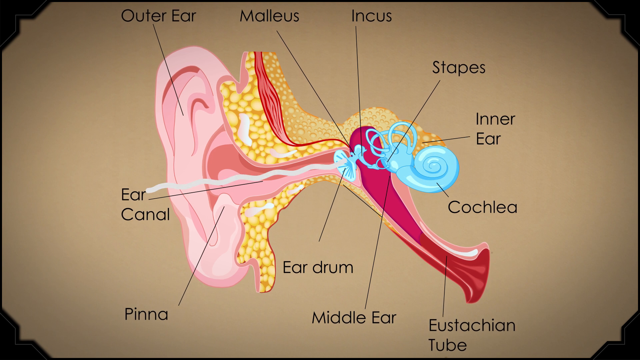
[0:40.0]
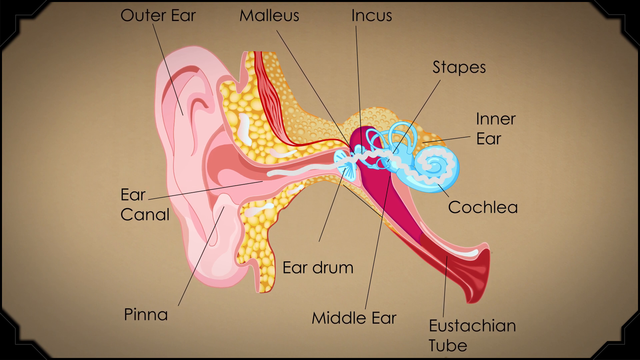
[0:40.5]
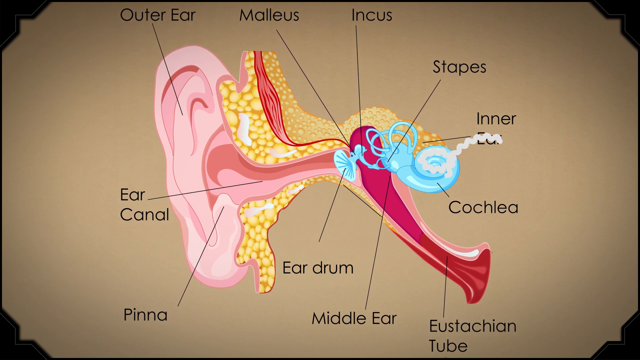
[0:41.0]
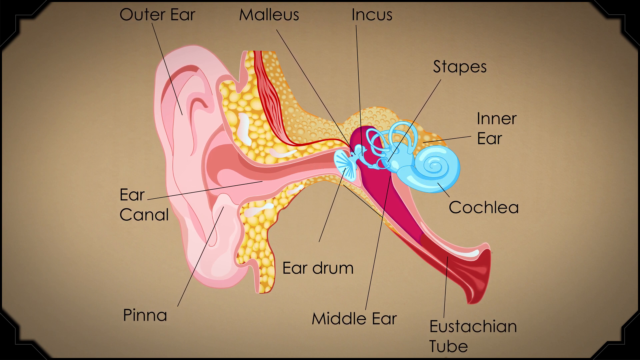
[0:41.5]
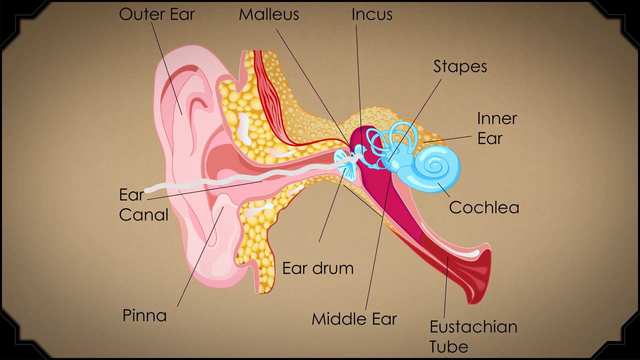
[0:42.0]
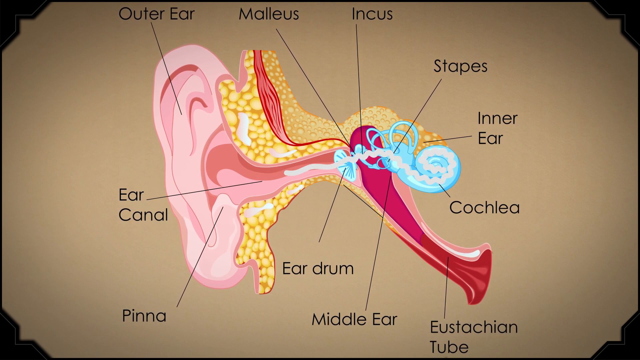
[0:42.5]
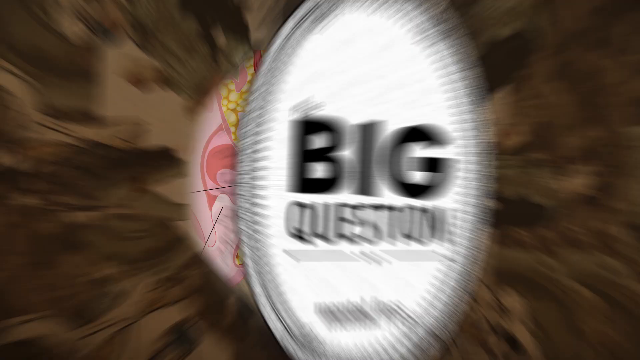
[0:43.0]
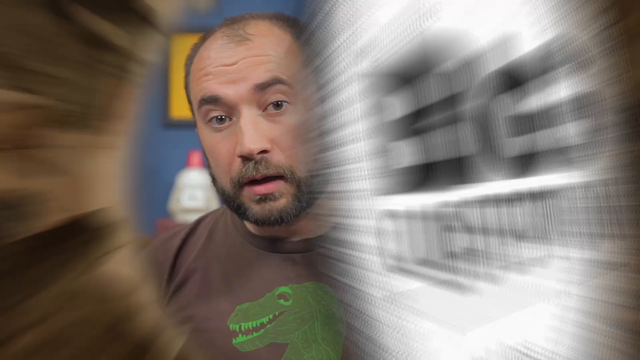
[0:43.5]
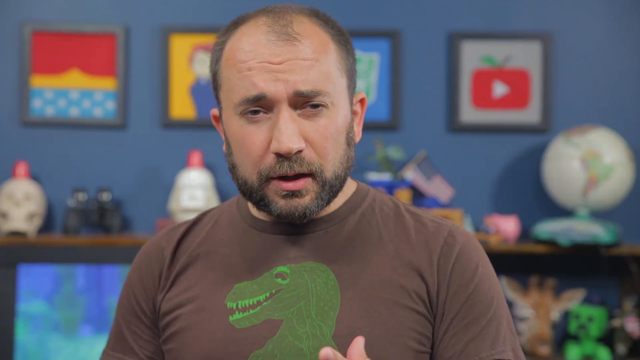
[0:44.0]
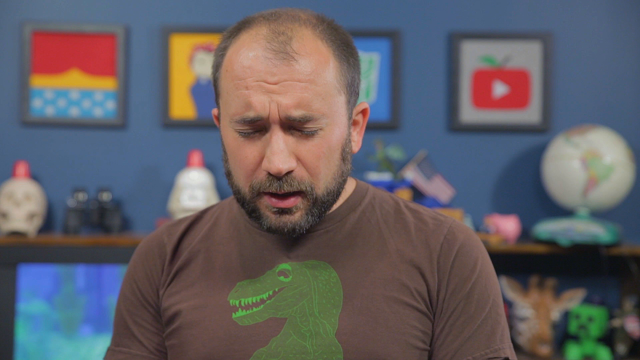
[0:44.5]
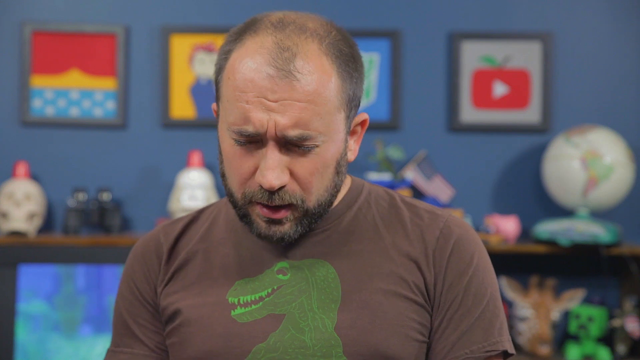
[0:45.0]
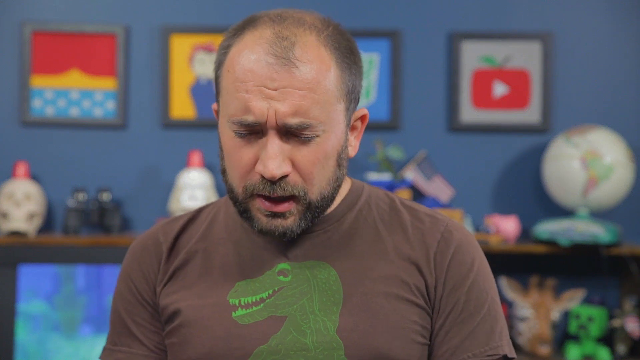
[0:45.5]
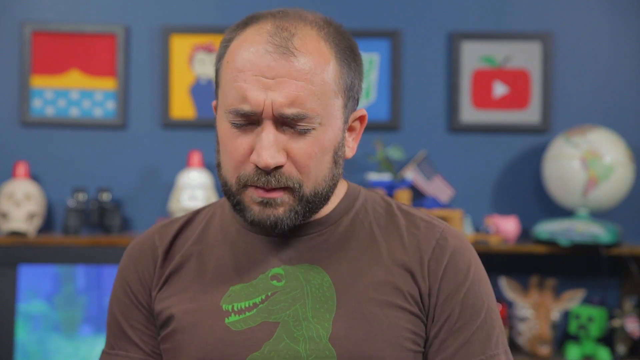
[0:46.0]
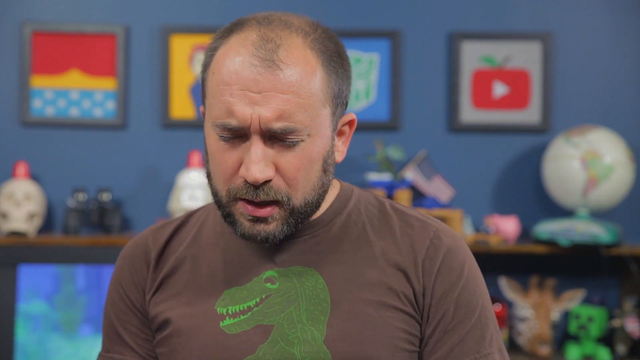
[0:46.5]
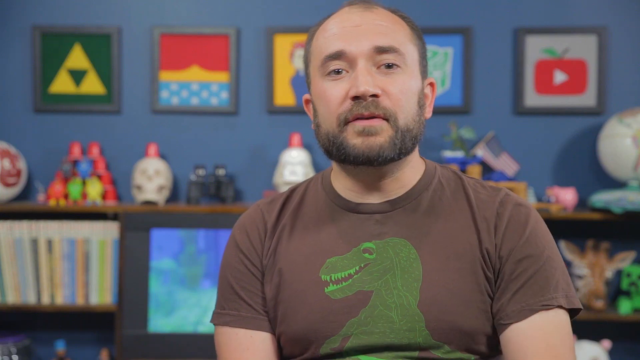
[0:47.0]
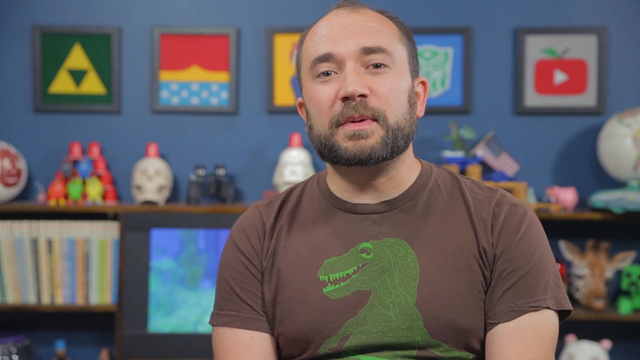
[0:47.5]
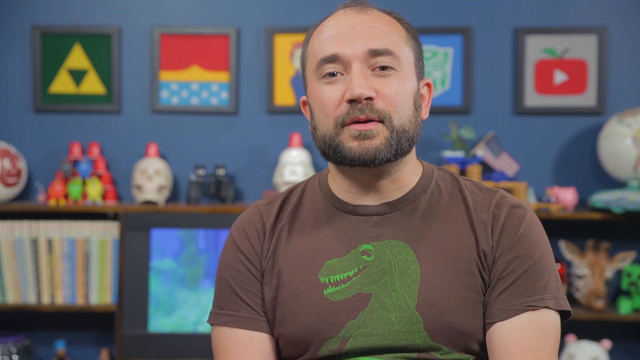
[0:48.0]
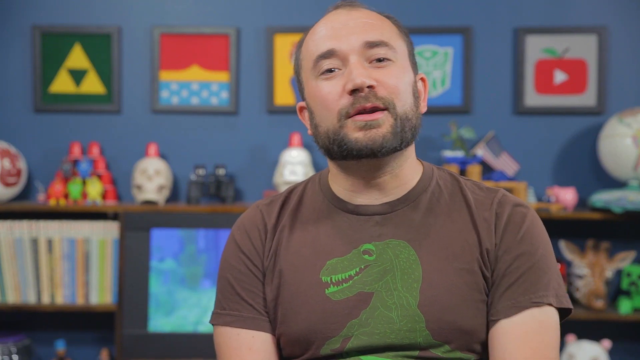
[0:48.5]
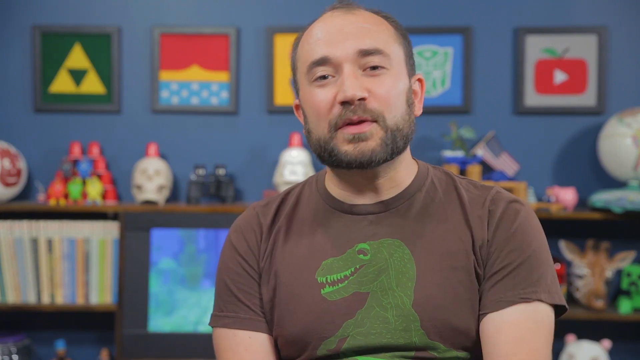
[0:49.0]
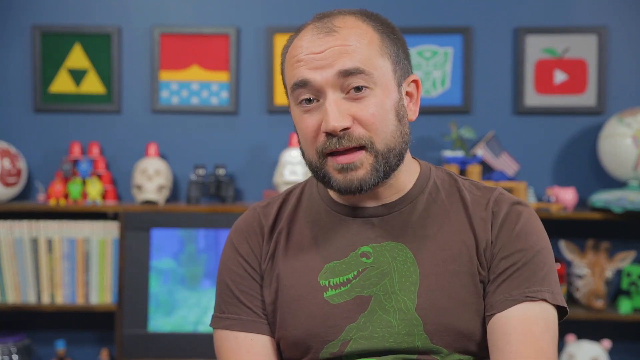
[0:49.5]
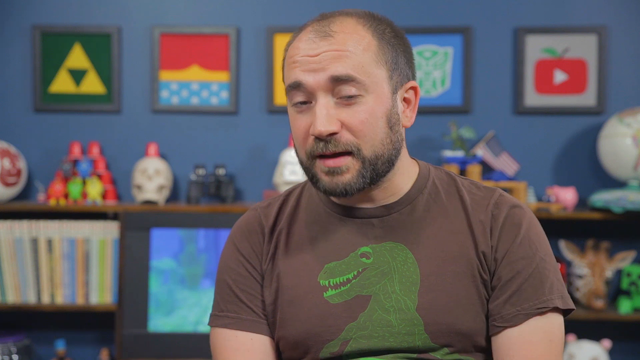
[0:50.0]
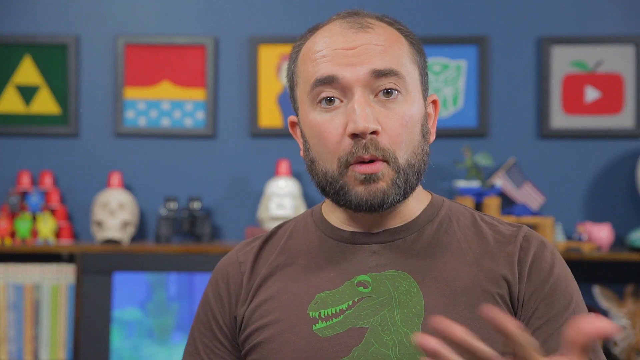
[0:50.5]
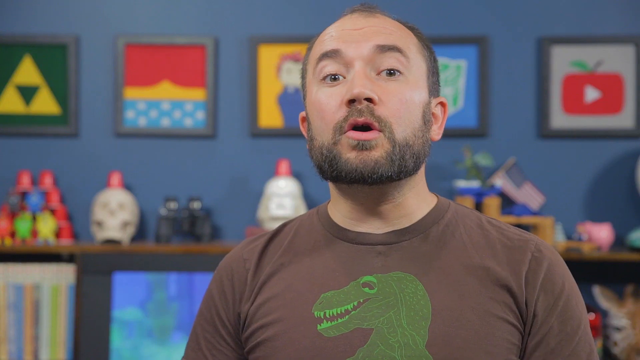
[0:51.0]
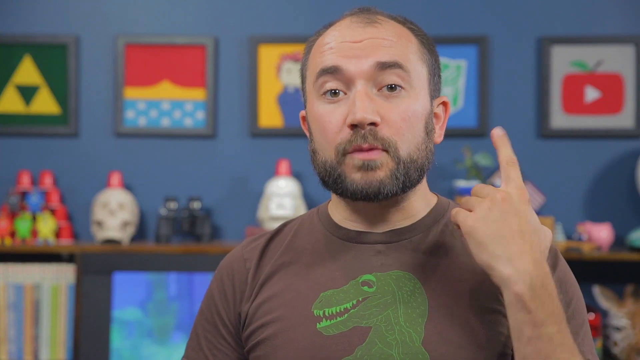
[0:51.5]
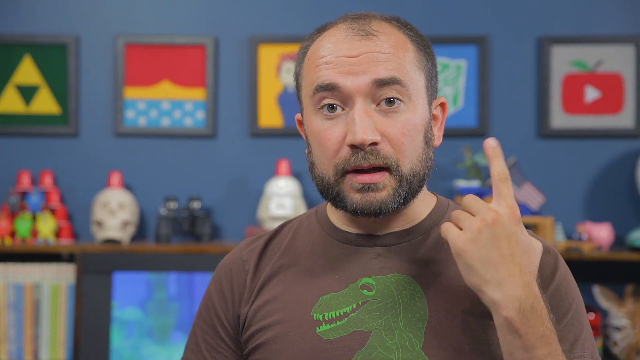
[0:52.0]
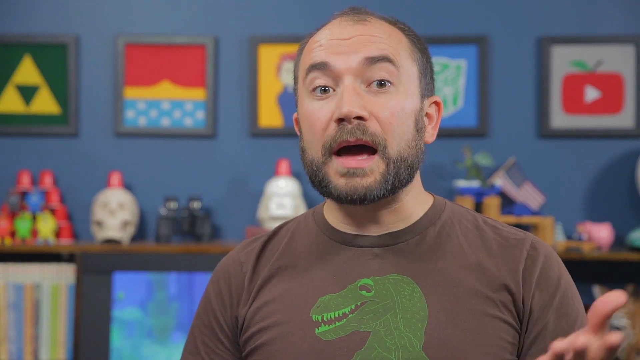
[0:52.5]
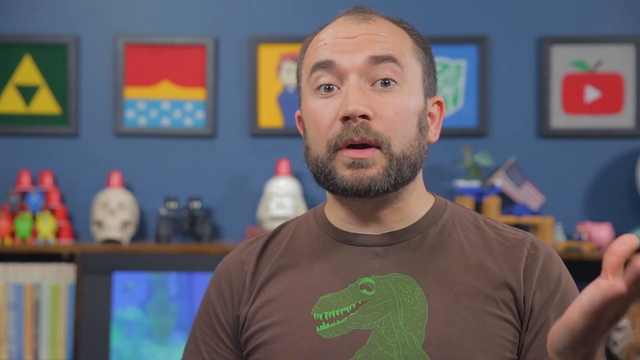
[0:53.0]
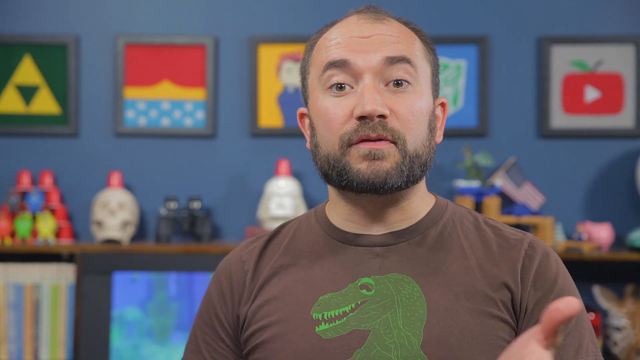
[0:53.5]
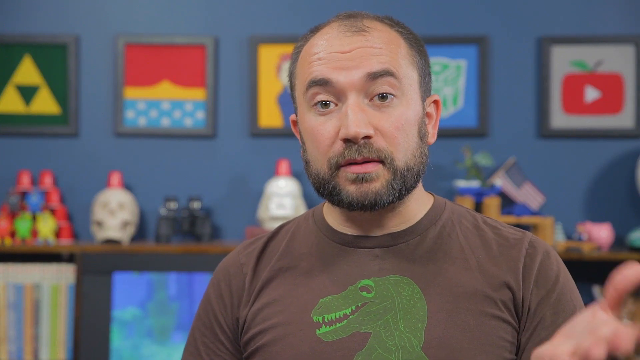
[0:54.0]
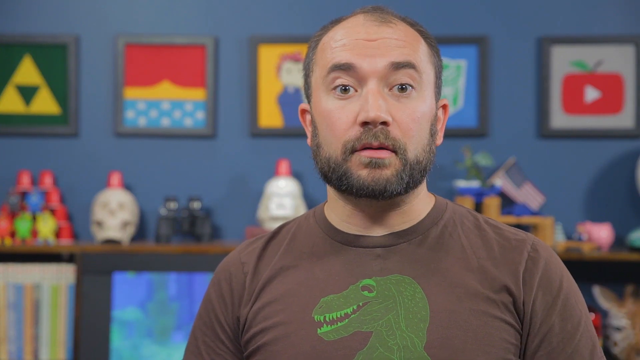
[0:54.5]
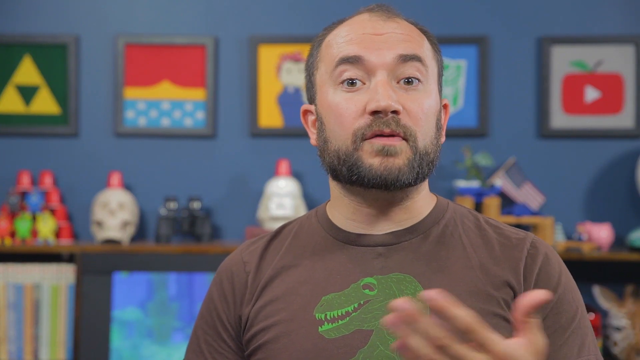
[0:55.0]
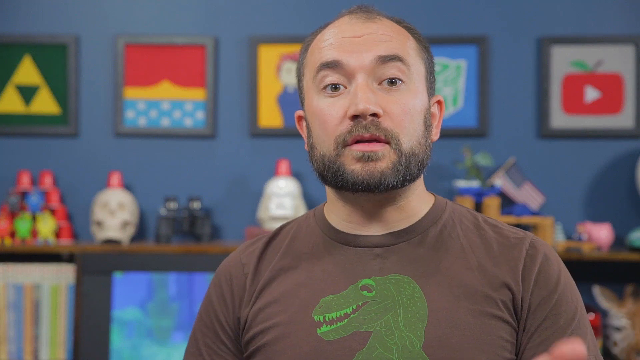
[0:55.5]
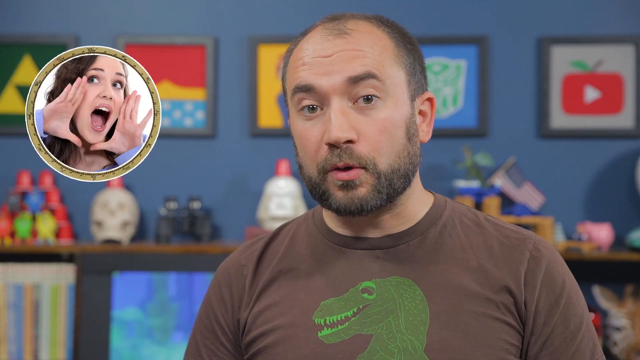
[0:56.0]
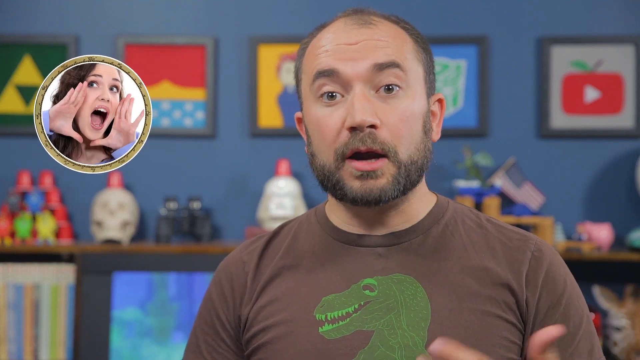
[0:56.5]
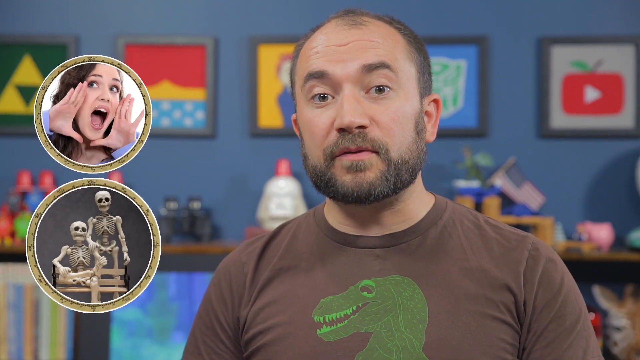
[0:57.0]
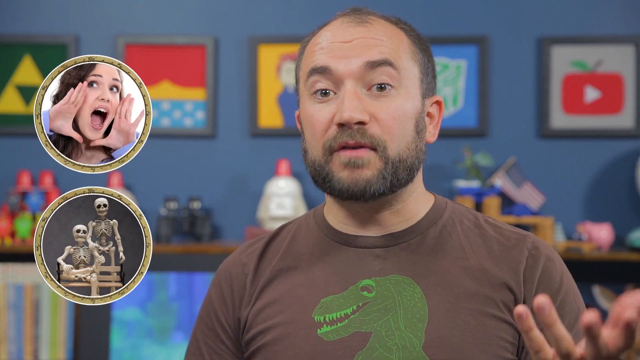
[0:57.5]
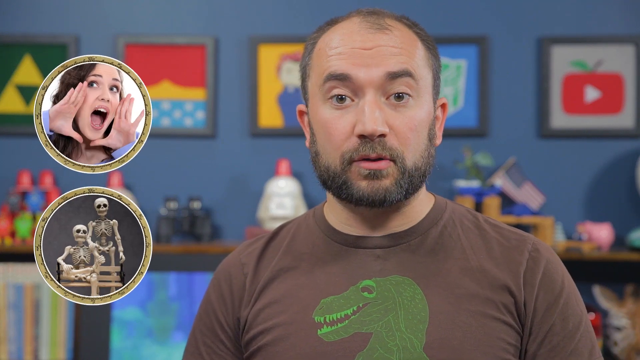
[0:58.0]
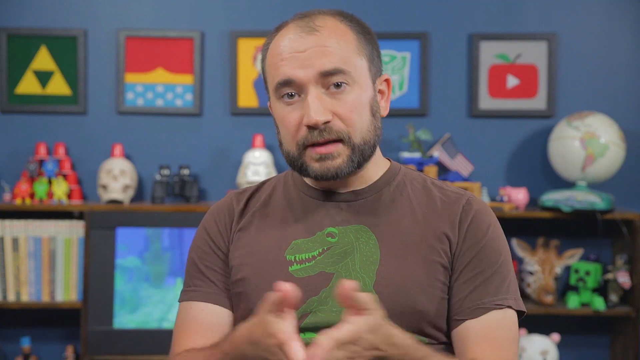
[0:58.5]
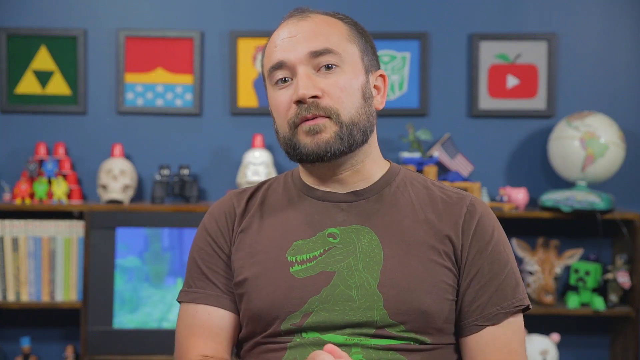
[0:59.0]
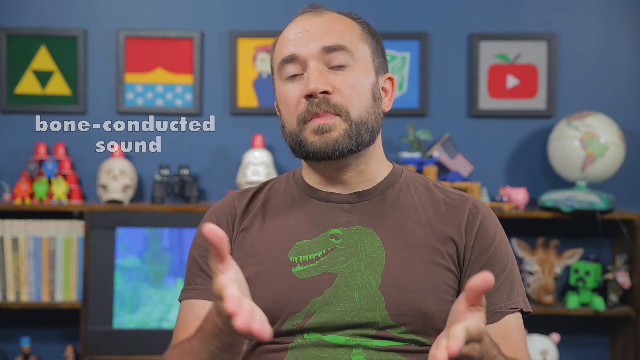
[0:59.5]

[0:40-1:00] A simplified diagram of the ear is shown, with a number of its parts labelled and a white line, apparently representing sound, entering the ear. That disappears, and text reads "The Big Question," surrounded by old-fashioned images of people. The video cuts to a man sitting in a room, wearing a brown shirt with a dinosaur on it, who starts to talk to the camera, at one point closing his eyes as he does so. He continues talking to the camera, with a few cuts, using his hands for emphasis. As he speaks, images pop up to the left, including a still image of a woman who appears to be shouting, as well as two skeletons. Those images disappear, and the text "bone-conducted sound" appears in white to the left of him.